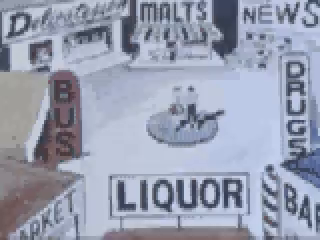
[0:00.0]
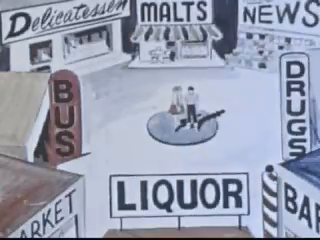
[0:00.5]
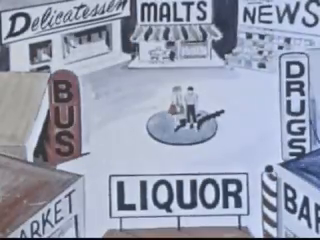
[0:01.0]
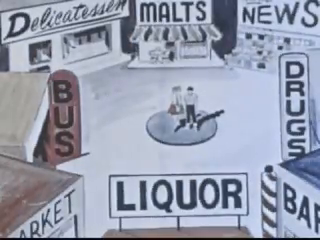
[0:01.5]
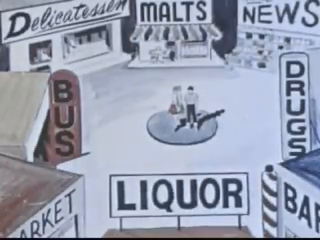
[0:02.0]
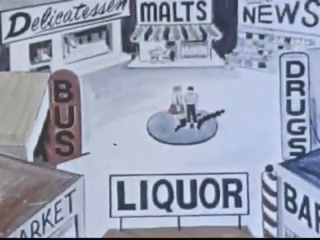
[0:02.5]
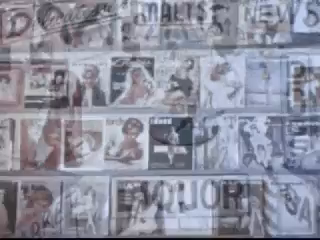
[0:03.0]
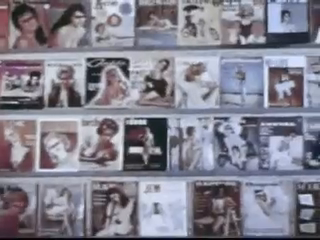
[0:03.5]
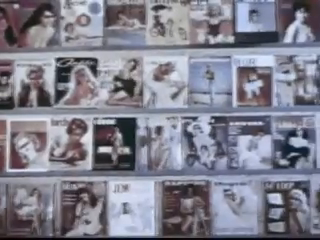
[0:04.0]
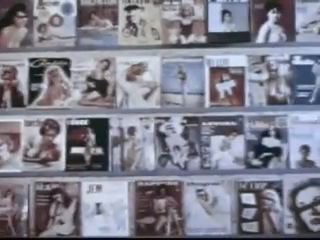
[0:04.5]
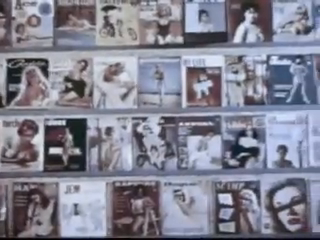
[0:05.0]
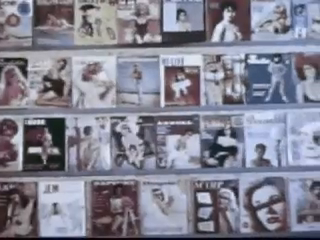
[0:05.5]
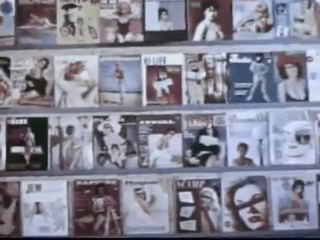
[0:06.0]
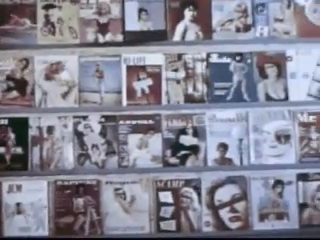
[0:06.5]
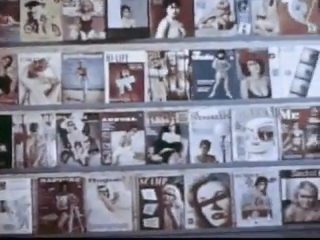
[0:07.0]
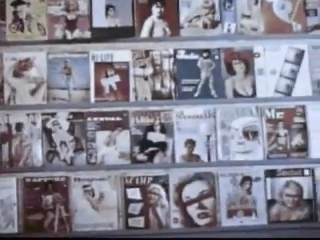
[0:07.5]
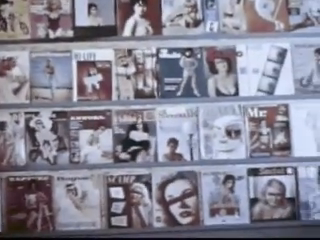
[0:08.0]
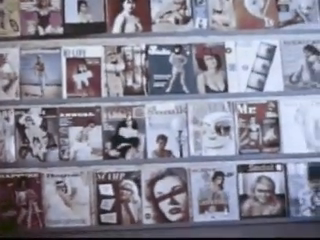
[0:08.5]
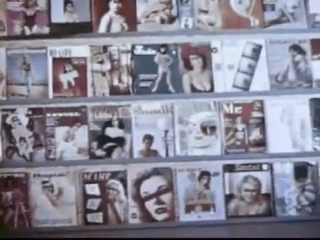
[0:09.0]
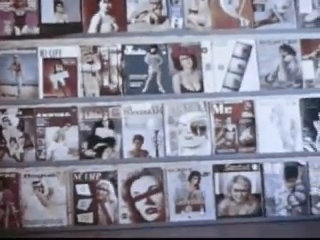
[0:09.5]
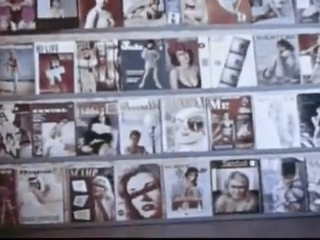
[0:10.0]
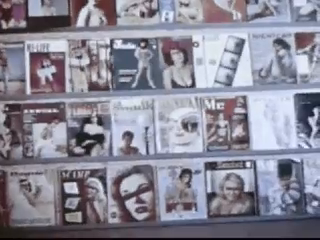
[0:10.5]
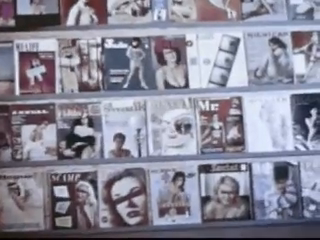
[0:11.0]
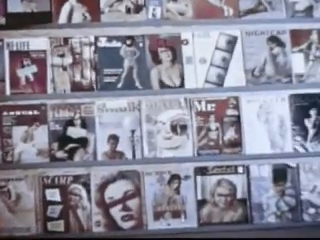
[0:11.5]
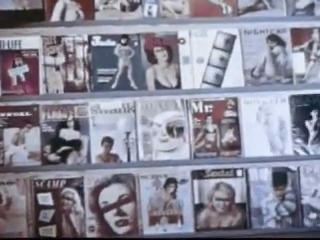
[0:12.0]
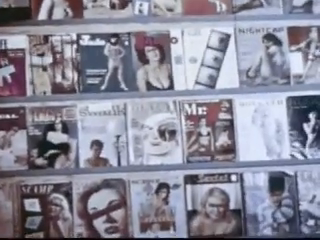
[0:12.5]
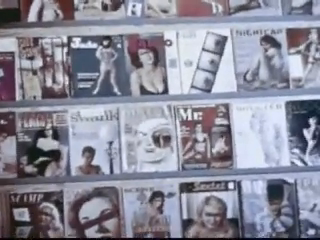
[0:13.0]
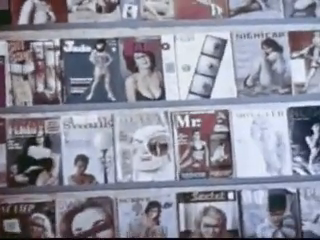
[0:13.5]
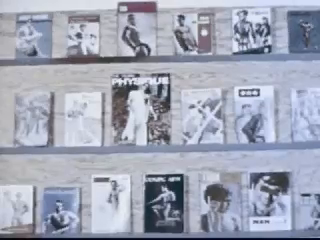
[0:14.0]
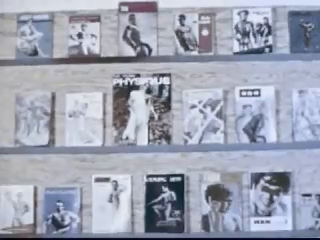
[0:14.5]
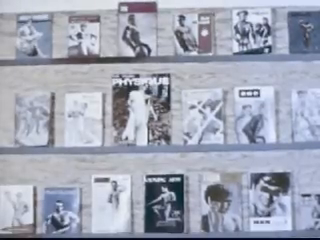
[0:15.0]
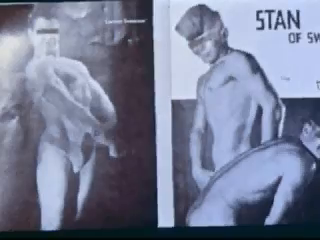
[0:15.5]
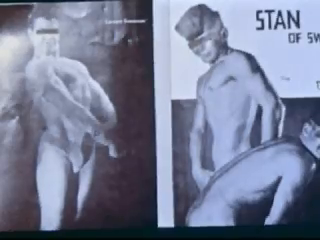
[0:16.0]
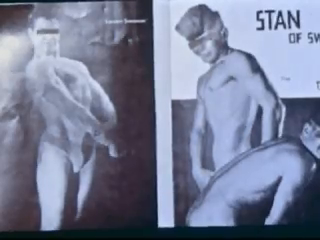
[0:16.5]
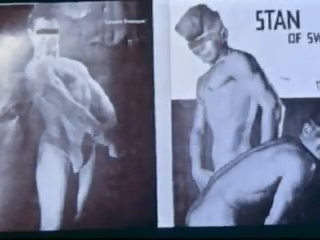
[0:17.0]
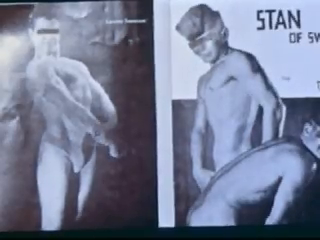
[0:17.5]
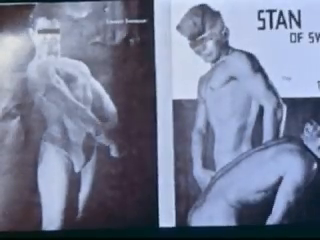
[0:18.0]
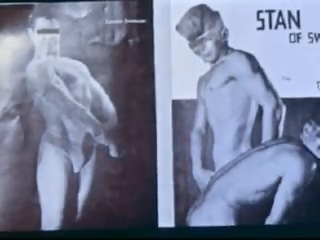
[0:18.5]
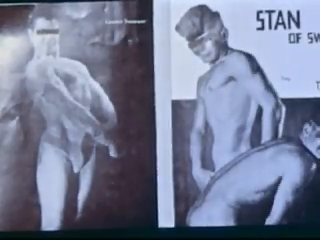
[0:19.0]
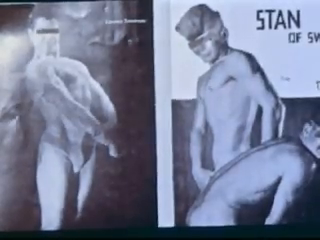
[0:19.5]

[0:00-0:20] The video looks like something from the 1950s or 1960s. It opens on an animated, cartoonish downtown area with malts, a bus station, a liquor store, a drugstore and something about the news. It then cuts to a collection of pictures, apparently from that same era, arranged in four rows with pictures side by side, probably at least 20 to 25 on screen at a time, as the view pans from left to right across them. The view then starts to zoom in, narrowing down to four pictures. Next come what look like comic books on a shelf, all stacked vertically. The video then moves to pictures of a bodybuilder-type man, apparently from around the 1960s, with a bar over the eyes so they cannot be seen; he has no shirt on and only his private area is covered. There are pictures of a man flexing and one man bent over. Briefly, a magazine appears showing a well-built, well-conditioned man with no clothes on except a little covering over the bottom area.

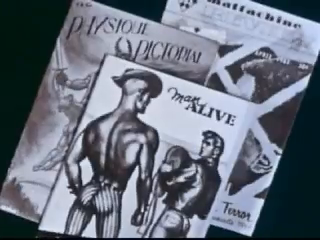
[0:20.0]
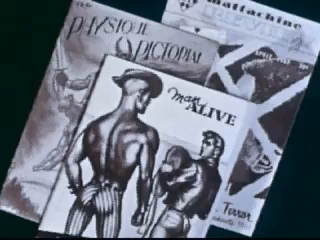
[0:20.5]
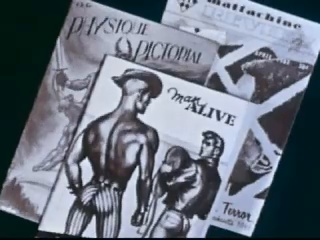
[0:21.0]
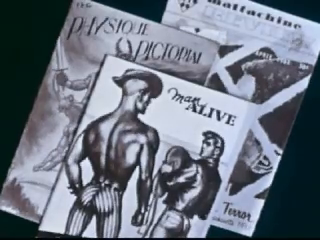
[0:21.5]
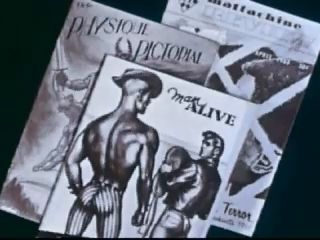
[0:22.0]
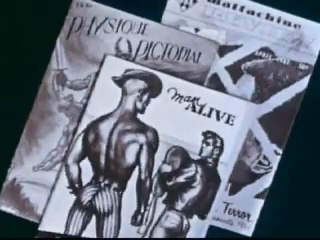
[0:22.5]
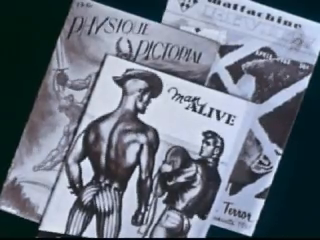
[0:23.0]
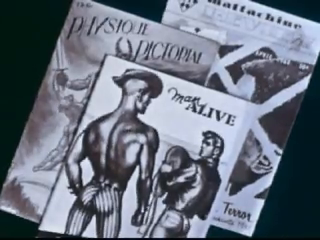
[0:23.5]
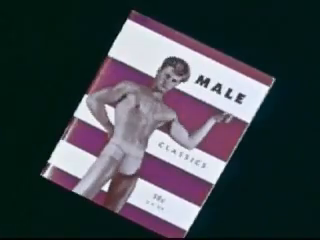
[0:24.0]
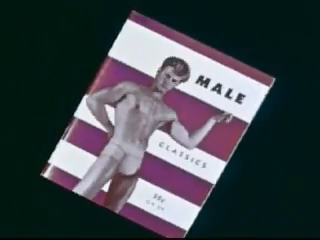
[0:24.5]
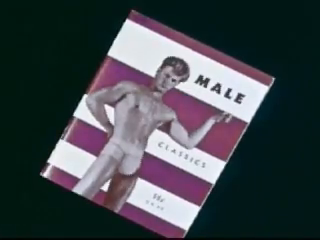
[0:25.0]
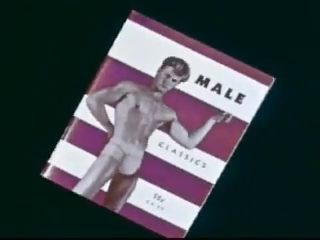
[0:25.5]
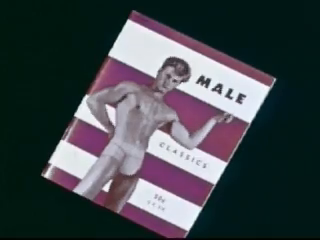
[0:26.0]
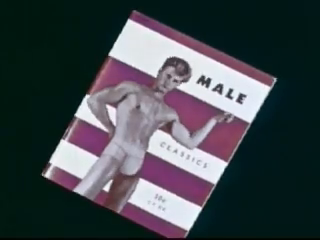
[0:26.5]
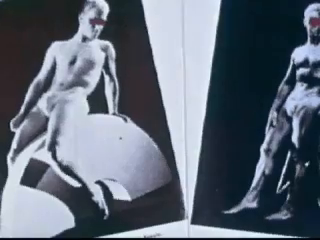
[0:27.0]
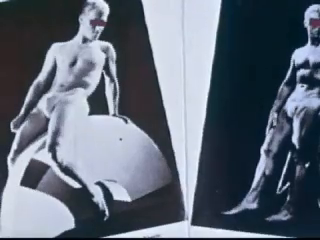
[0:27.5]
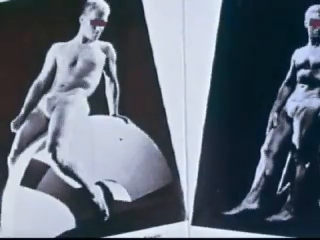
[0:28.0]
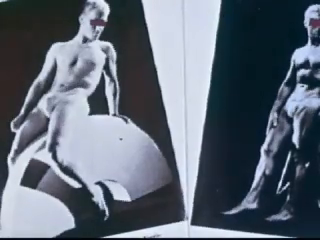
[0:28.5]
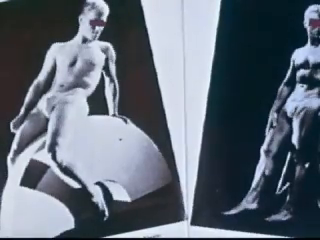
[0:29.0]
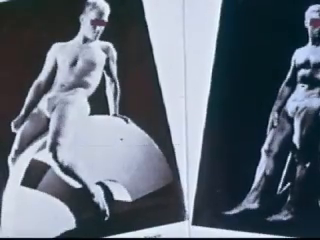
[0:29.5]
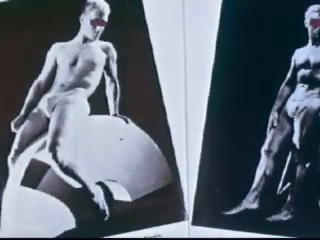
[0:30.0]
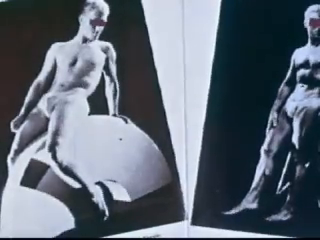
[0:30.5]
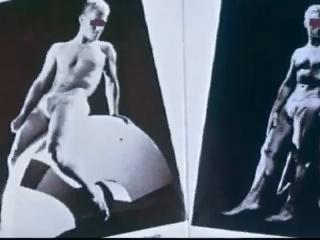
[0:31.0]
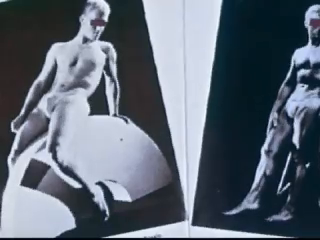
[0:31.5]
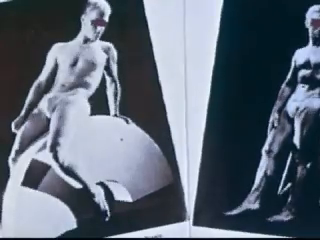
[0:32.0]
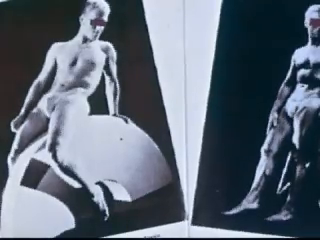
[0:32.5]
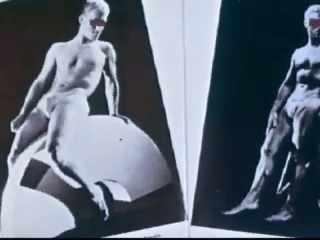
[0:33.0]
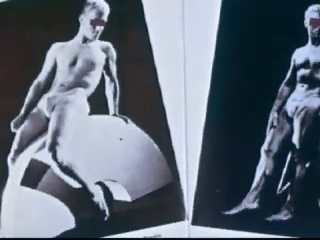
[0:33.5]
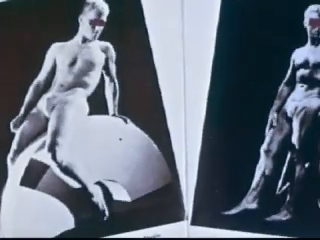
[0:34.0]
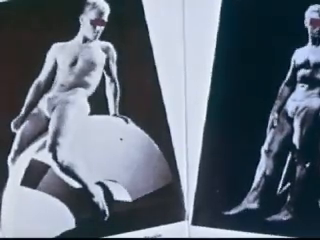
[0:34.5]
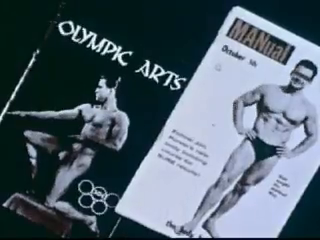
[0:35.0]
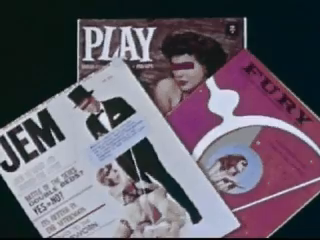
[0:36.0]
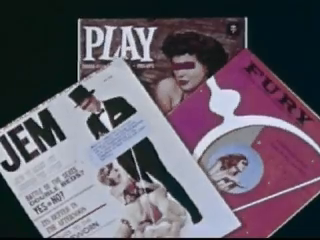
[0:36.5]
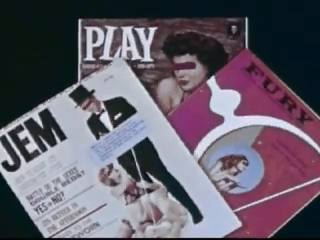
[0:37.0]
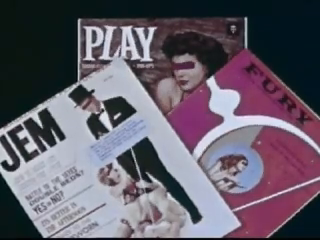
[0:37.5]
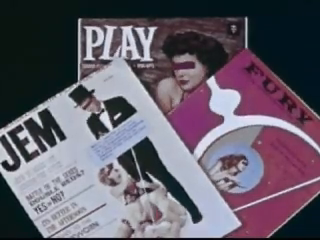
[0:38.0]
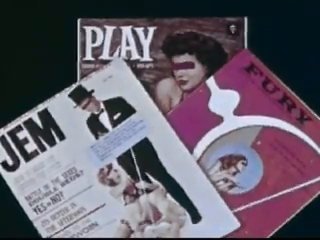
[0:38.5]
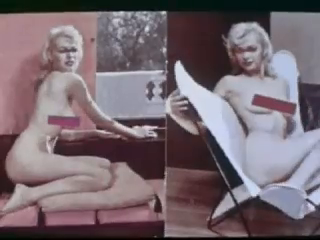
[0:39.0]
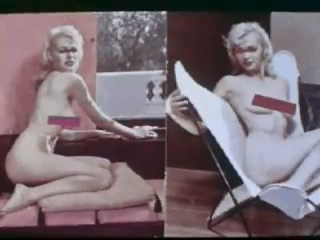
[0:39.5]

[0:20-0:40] Old magazines, apparently from the 1950s or 1960s, show men who look like models or professional bodybuilders. One title is "Man Alive"; another begins with "Passion" but is hard to read. The men are shirtless with nice hair and little on below, and one wears a cowboy hat. Then the text "Male Classics" appears with a picture of a toned, in-shape man with nice hair, no shirt, and just something covering his private area. Another picture follows of a man whose eyes are blanked or X'd out; he is sitting on something hard to see, which looks like a big yoga ball, posing and flexing his muscles, possibly with a reflection in a mirror. Another built man goes by very quickly. The video then switches to other magazines, one called "Gem", one called "Fury", and one in the back with a picture of a woman that might be Playboy. The eyes of the people on them are X'd out. Then come pictures of naked women with their eyes crossed off and their breast areas blanked out.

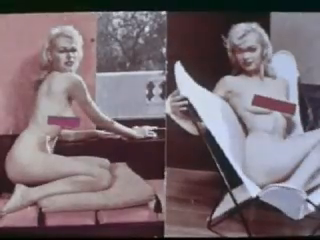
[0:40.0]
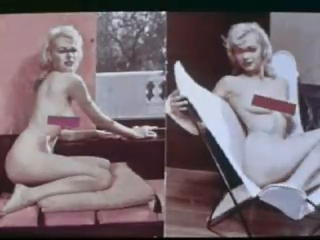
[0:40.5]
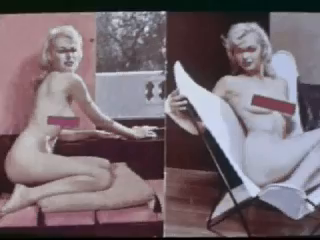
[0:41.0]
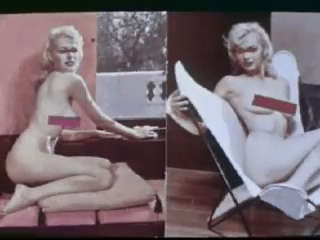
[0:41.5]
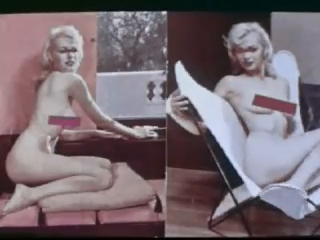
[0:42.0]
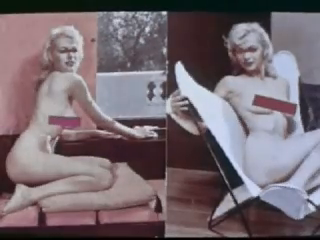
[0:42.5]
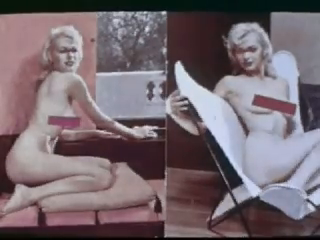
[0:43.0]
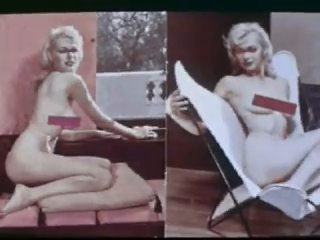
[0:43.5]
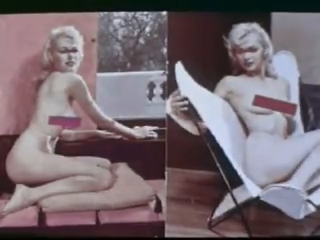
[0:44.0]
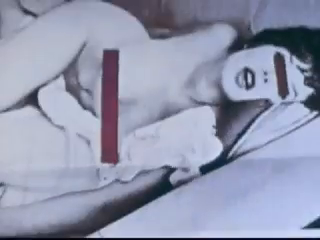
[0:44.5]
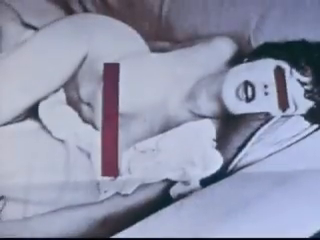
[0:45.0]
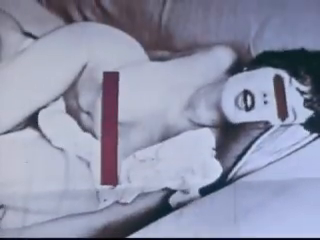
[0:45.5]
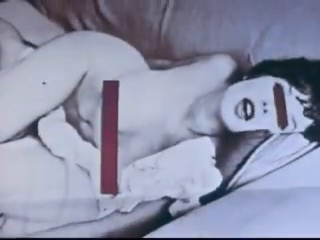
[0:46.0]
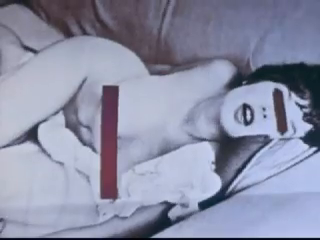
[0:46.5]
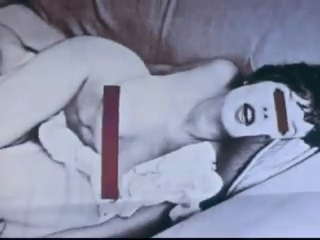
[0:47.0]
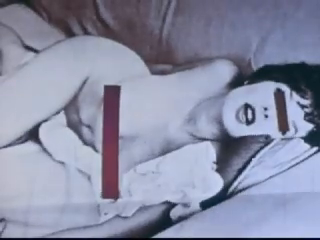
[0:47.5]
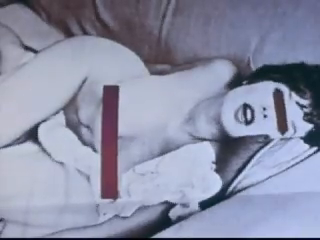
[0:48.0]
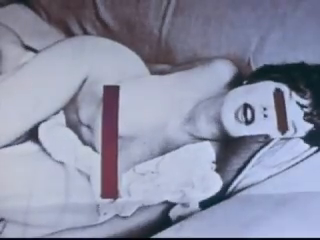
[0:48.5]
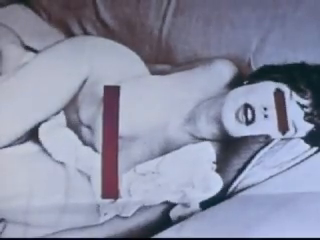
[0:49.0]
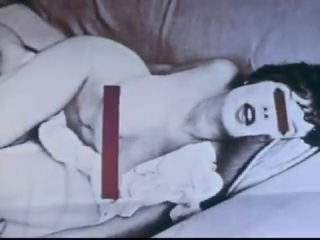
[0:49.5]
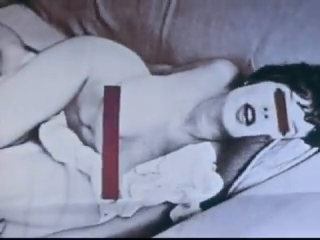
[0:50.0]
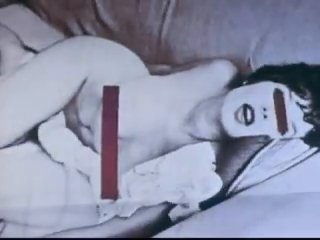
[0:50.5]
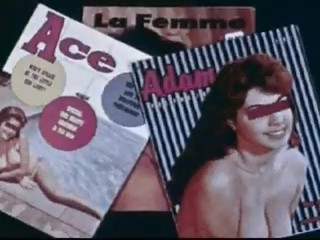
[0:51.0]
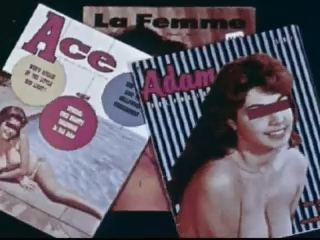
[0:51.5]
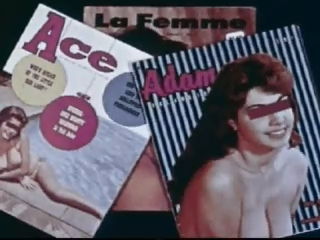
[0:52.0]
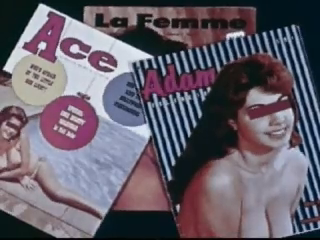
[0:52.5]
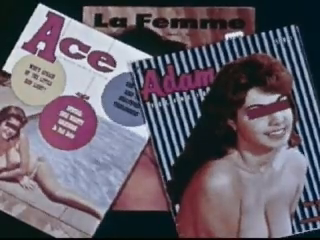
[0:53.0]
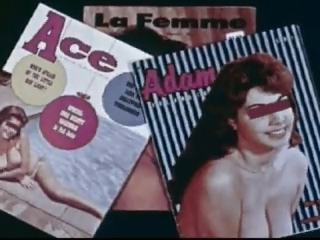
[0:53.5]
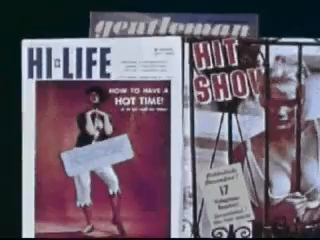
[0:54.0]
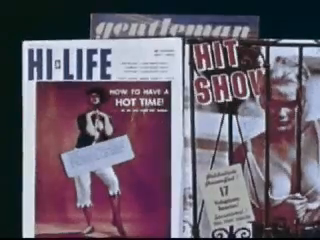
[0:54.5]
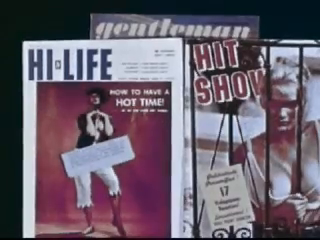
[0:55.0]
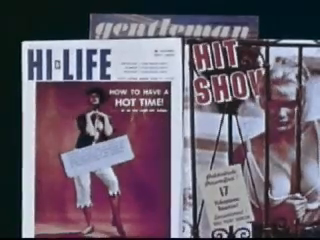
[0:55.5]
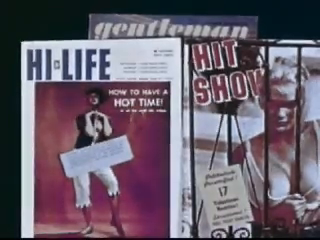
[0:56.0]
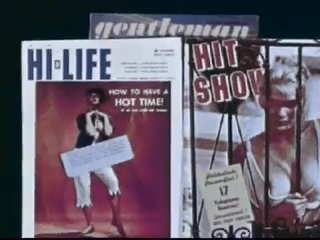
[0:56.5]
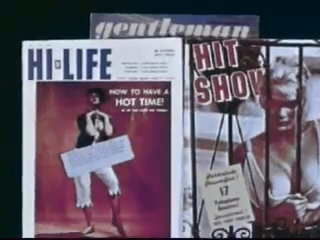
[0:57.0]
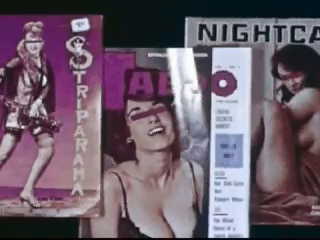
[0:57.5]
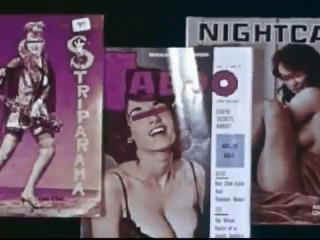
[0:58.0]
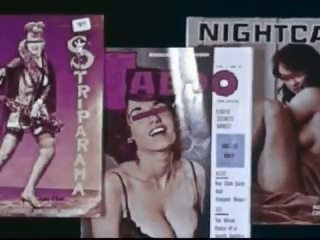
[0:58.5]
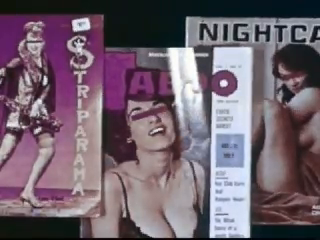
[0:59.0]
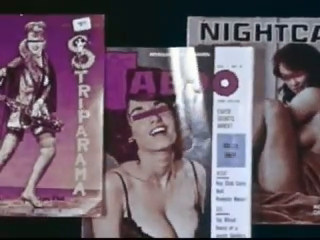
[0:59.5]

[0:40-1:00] A naked woman appears with her private areas blocked out, shown in two different poses while having pictures taken; she is skinny and toned. Next, another woman is lying down having her picture taken, with her eyes blacked out and her breast area blacked out by a rectangular bar. Then magazine covers for three magazines appear, called "Ace", "Adam" and "La Famine". The "Ace" cover shows a naked woman with only her eyes crossed off, and the "Adam" cover shows a woman whose eyes are also crossed out. The video moves from cover to cover, showing two more called "The High Life Gentleman" and "Hit Show", featuring women. The next set includes one whose title begins with "Night" and cannot be fully read, one called "Strip Parma", and another magazine too glared to see. The pictures show women posing nude.